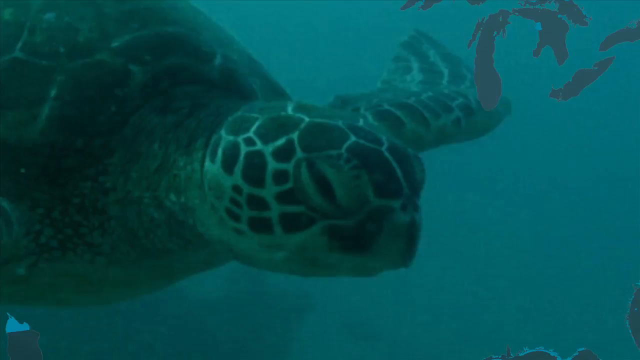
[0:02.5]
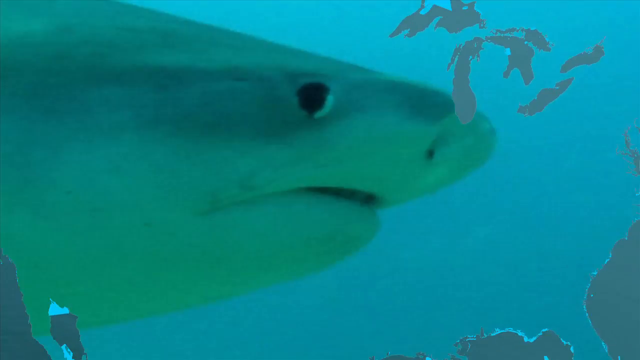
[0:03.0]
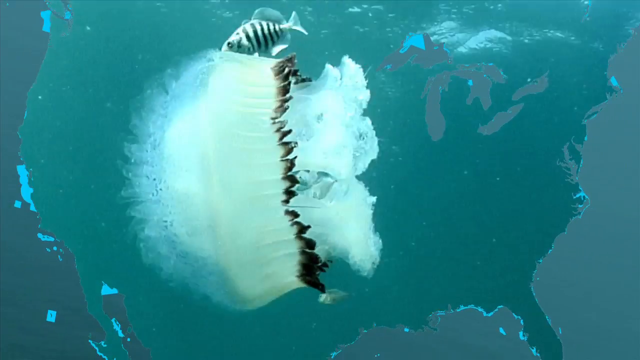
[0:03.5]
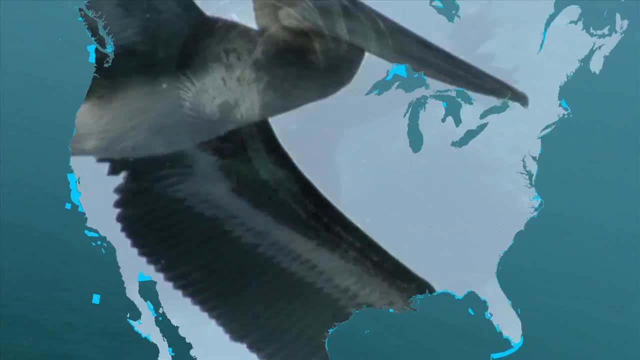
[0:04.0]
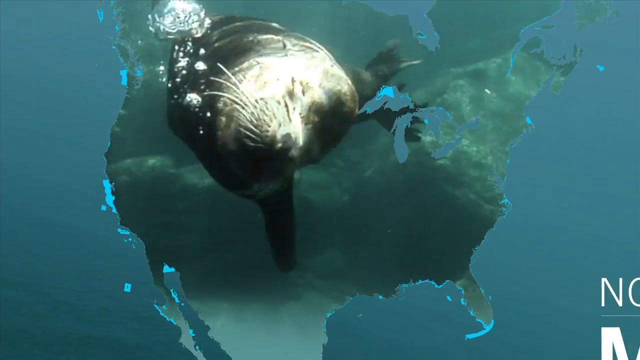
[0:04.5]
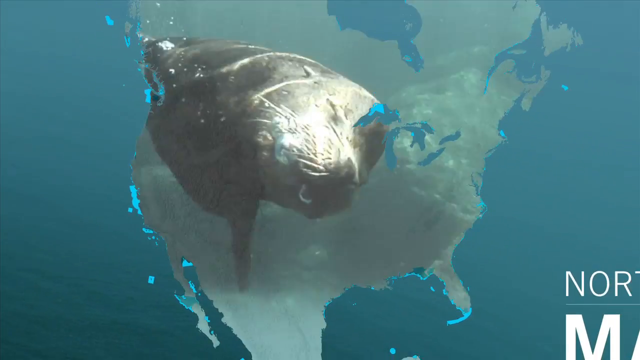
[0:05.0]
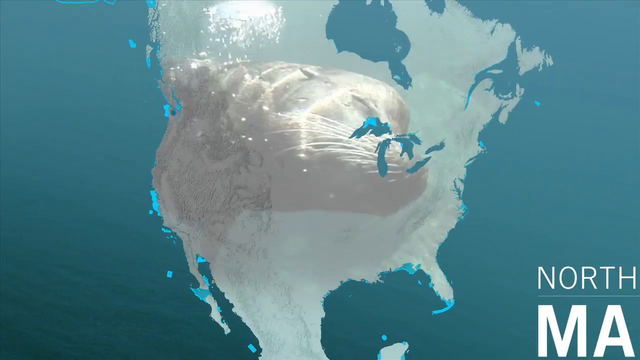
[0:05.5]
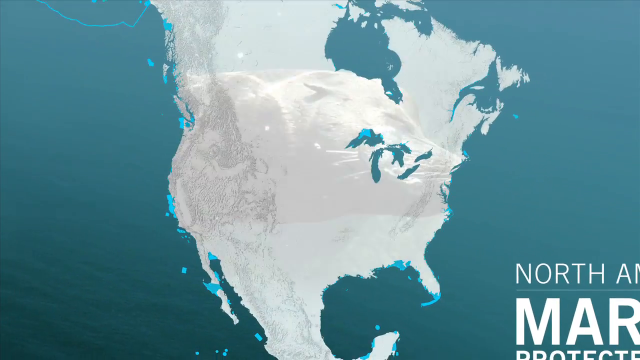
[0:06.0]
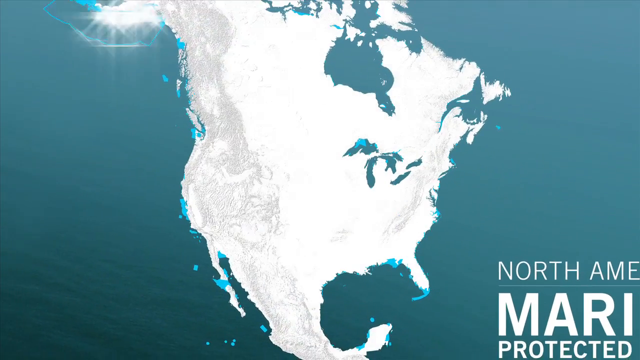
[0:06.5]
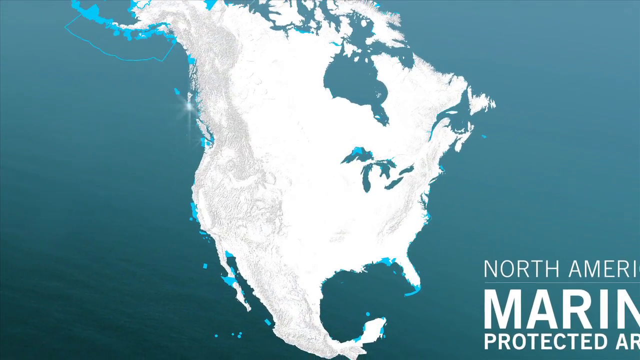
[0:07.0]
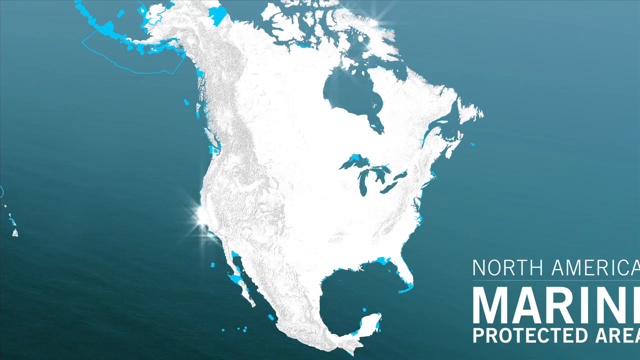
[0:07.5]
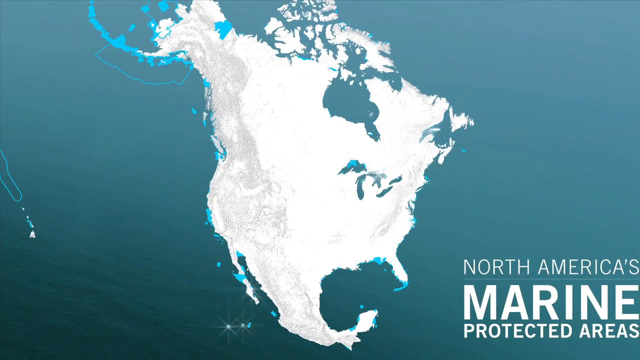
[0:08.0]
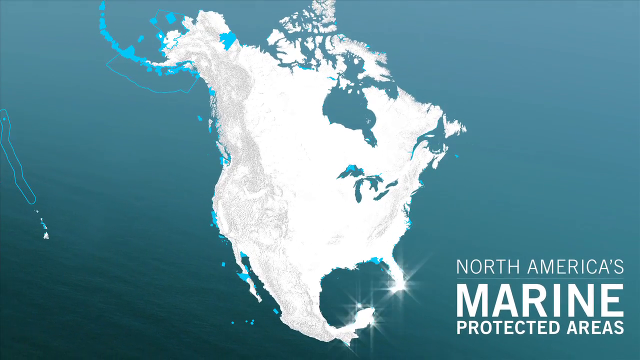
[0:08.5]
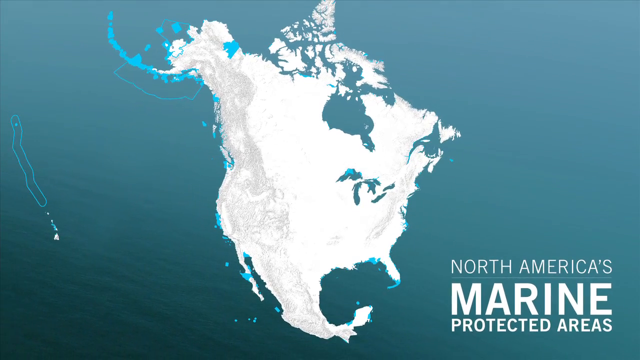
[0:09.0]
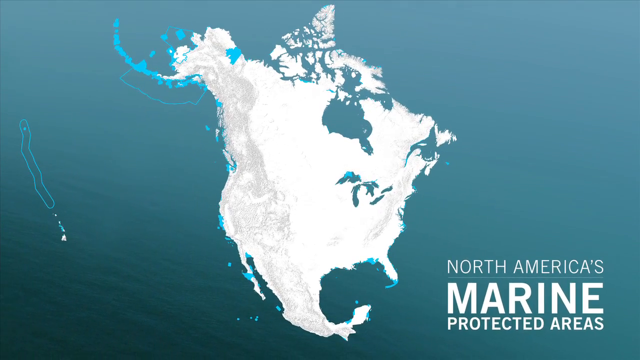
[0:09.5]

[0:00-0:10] The video opens on a black screen, followed by underwater marine animals, including a turtle and a shark. A hornbill bird of some type appears, and then the pictures start to zoom out to reveal the continent of North America, with North America's marine protected areas. The ocean around the continent is a very majestic blue, and a sea lion is also seen. Some areas of the continent are covered in blue, the majority of it is white, and some areas are gray. The continent is shining.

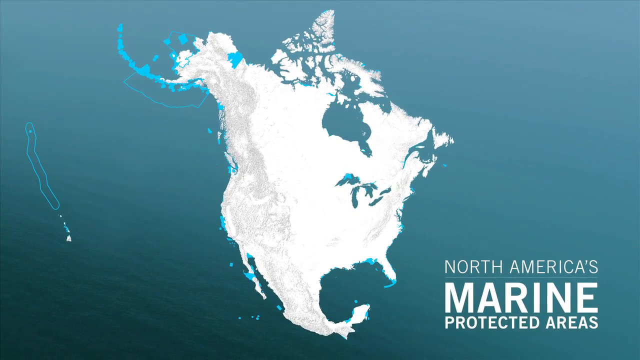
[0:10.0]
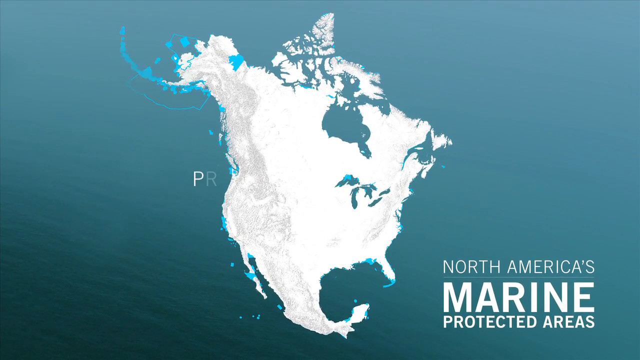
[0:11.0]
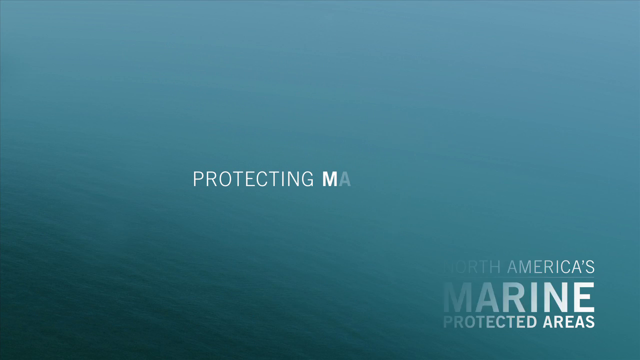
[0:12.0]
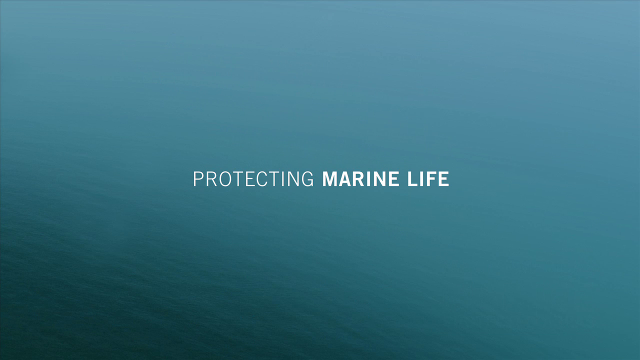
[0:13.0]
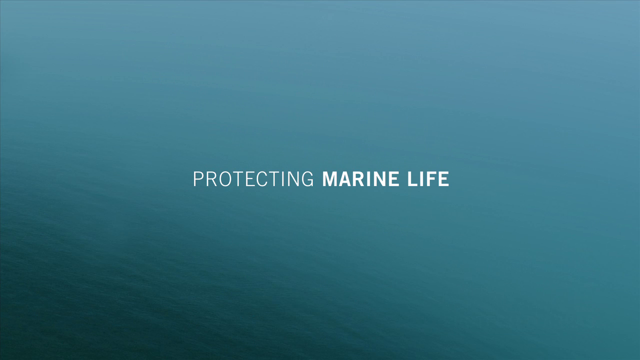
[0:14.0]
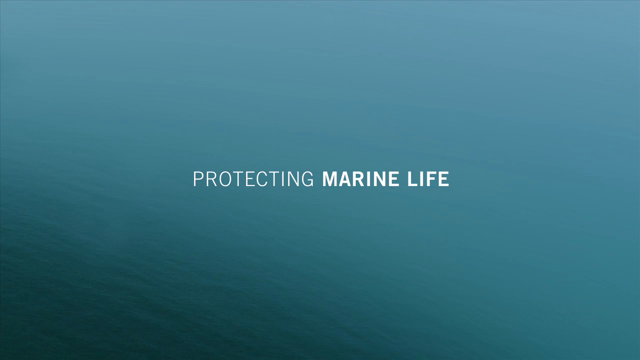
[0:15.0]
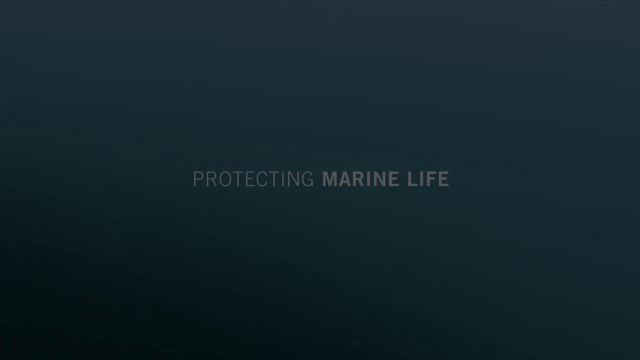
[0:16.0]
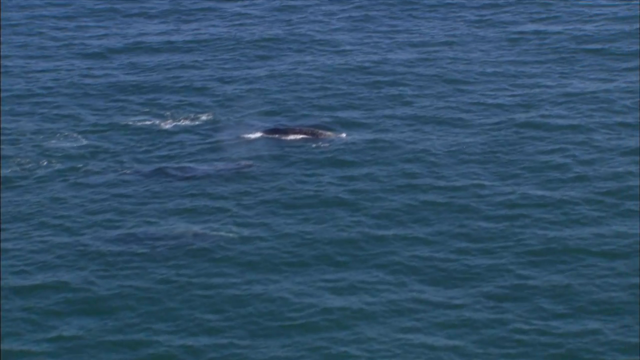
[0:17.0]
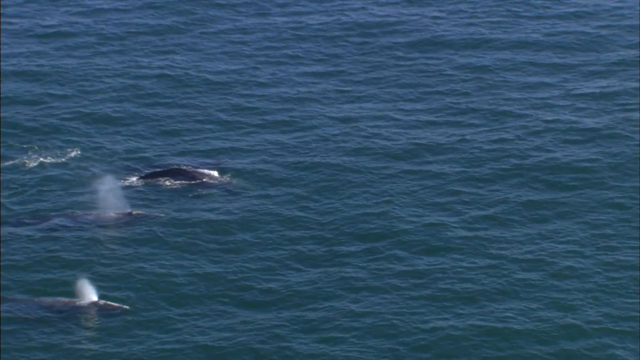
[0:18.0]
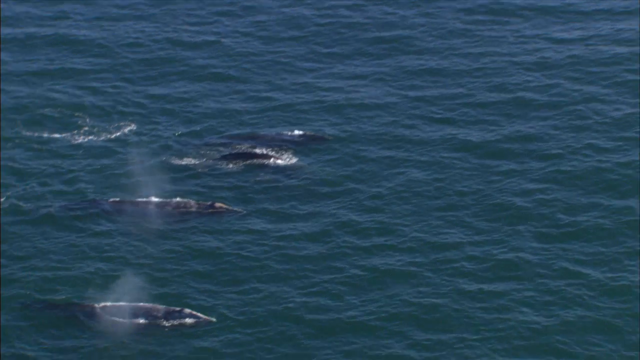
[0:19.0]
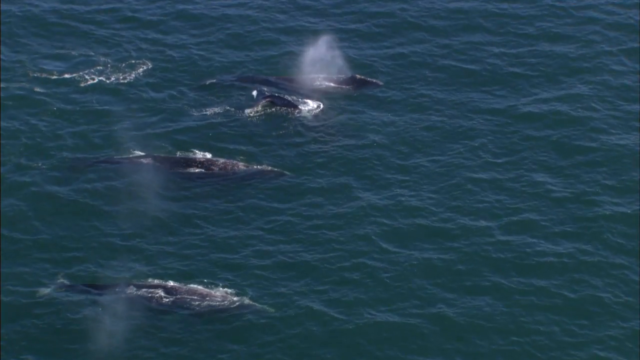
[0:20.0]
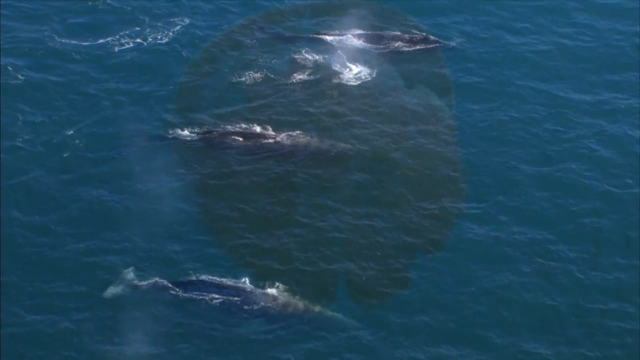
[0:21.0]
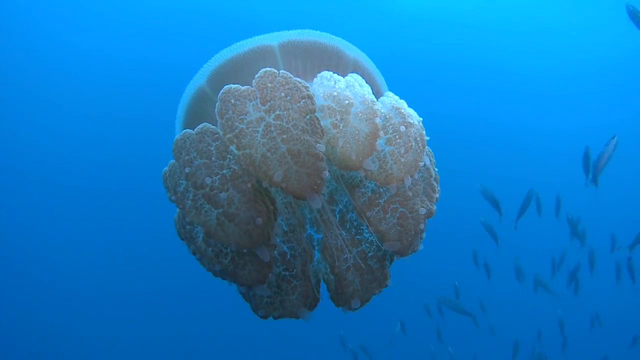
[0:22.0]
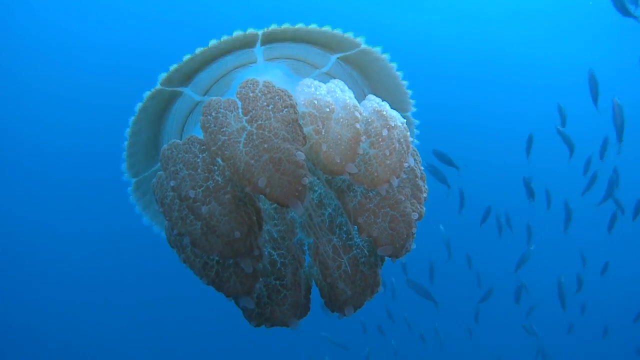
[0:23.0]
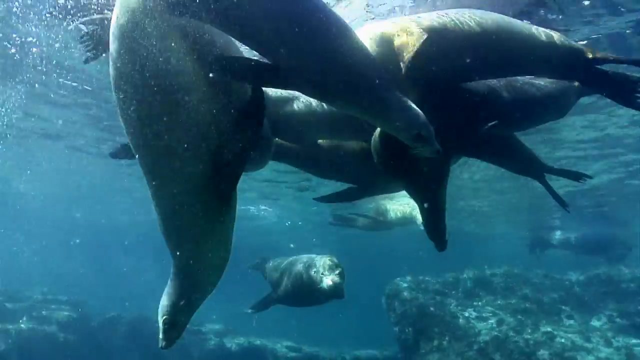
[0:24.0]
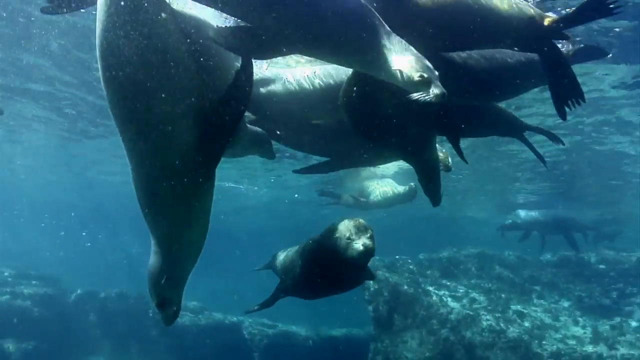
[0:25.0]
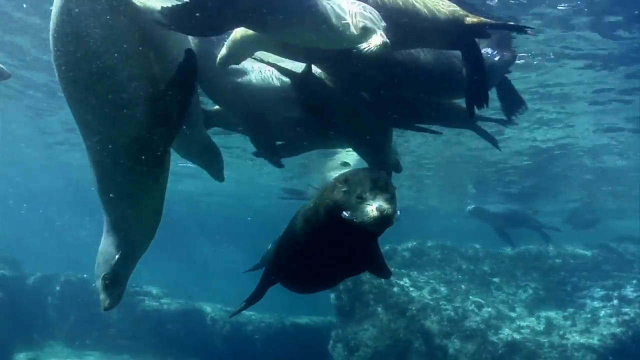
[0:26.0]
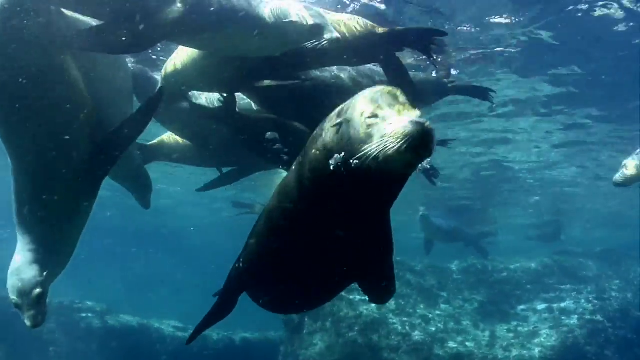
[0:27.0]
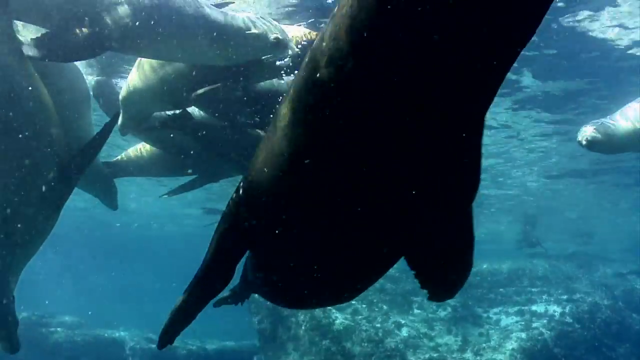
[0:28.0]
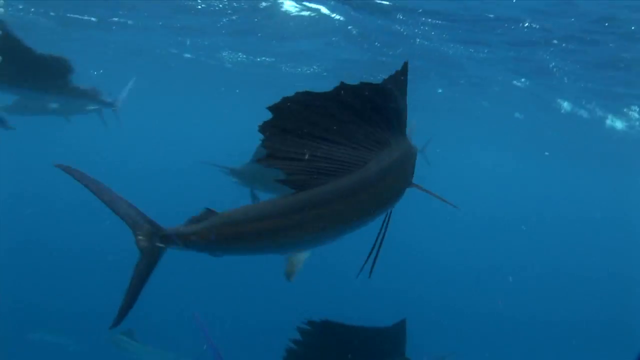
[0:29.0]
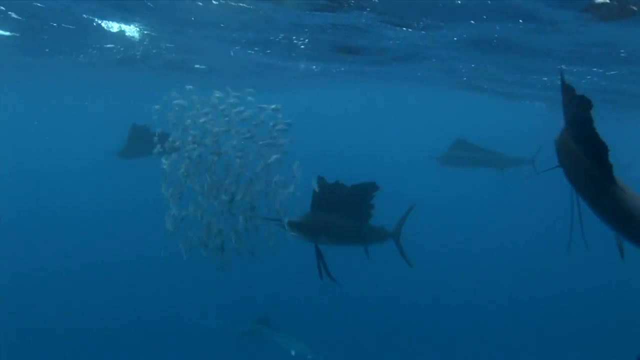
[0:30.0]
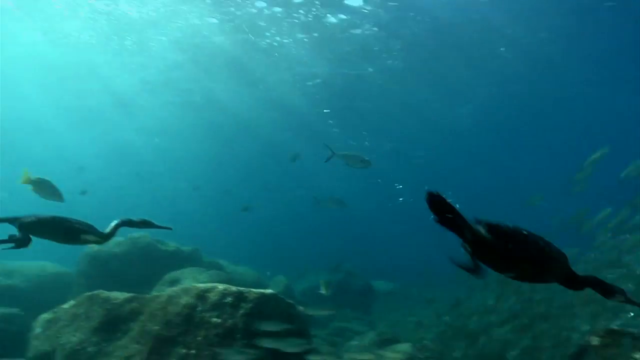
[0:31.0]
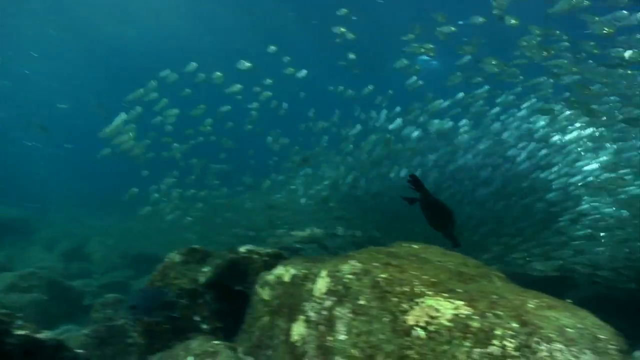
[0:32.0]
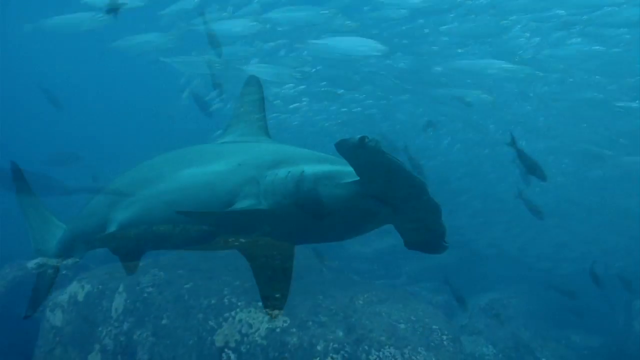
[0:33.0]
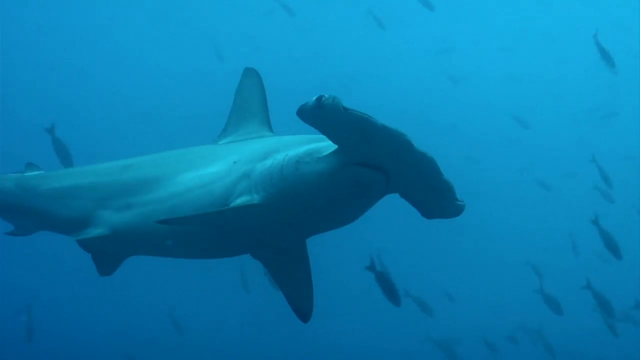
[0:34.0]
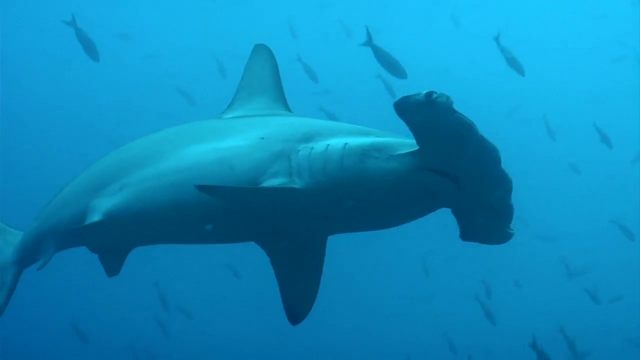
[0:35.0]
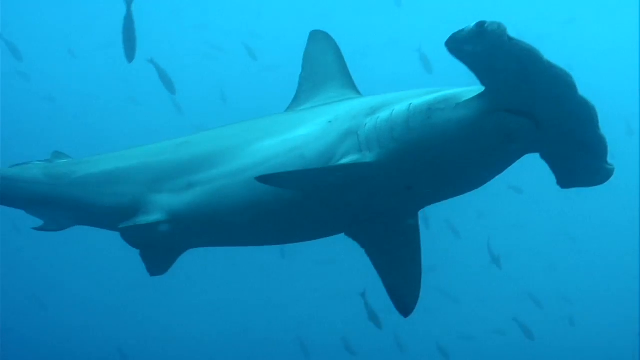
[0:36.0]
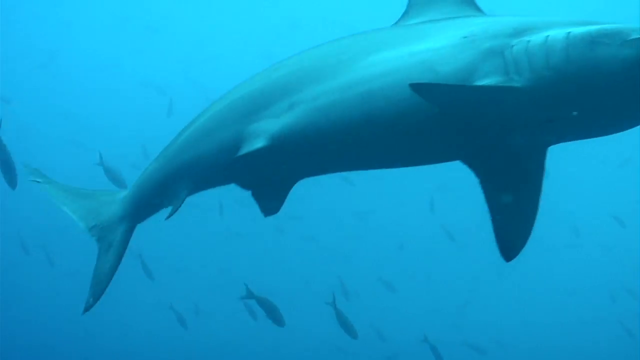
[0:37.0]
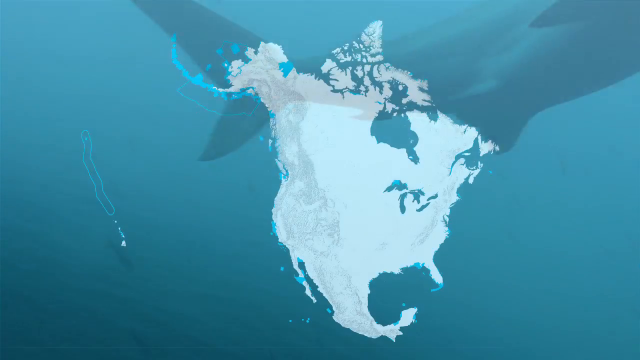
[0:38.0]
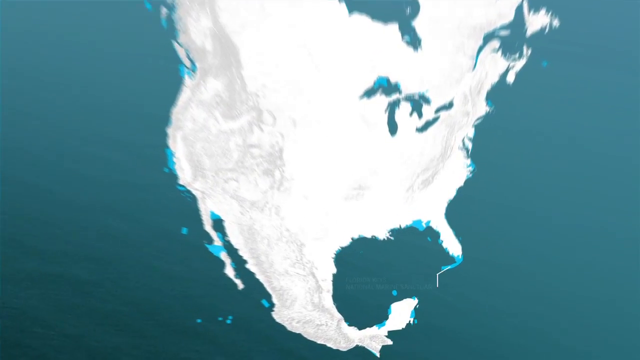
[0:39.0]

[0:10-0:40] The North American continent is shown with some patches of blue and some gray, and some parts of the continent are twinkling. In the very right corner are the words "North America's marine protected areas." Next comes "Protecting marine life," and then the screen turns black. Footage of the ocean follows, with animals emerging from the water that appear to be humpback whales or whales of some sort. A jellyfish appears, then seals swim around, including close-up shots of the seals. Swordfish swim around, ducks or some sort of bird dive in to get fish, and a hammerhead shark swims around peacefully. The North American continent appears again and zooms in to an area that is Florida.